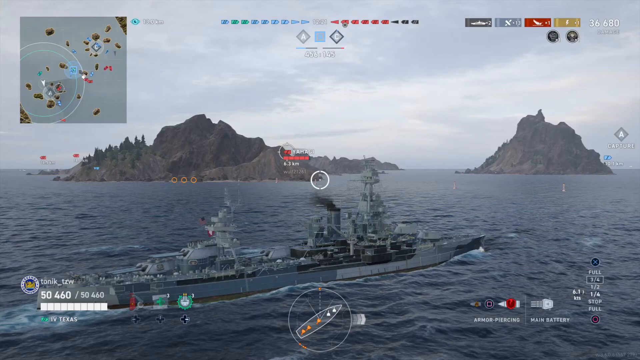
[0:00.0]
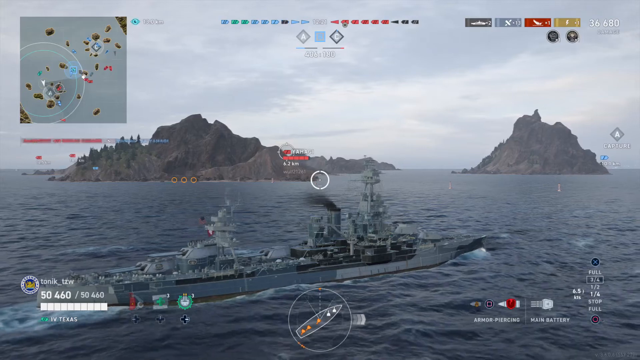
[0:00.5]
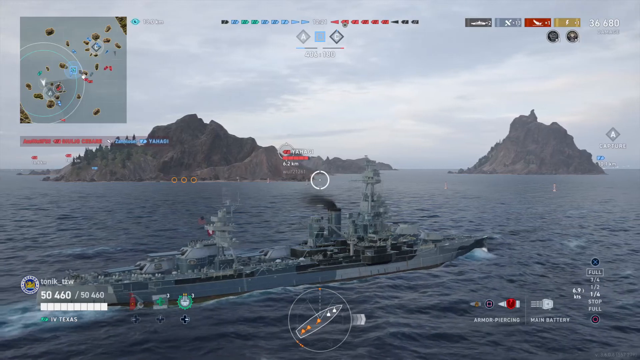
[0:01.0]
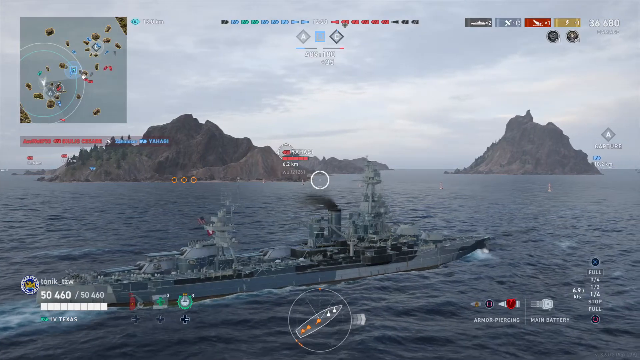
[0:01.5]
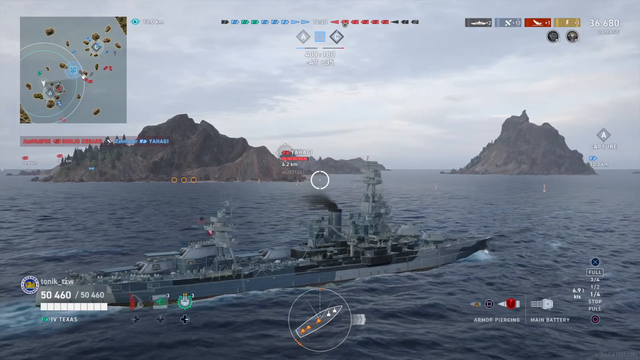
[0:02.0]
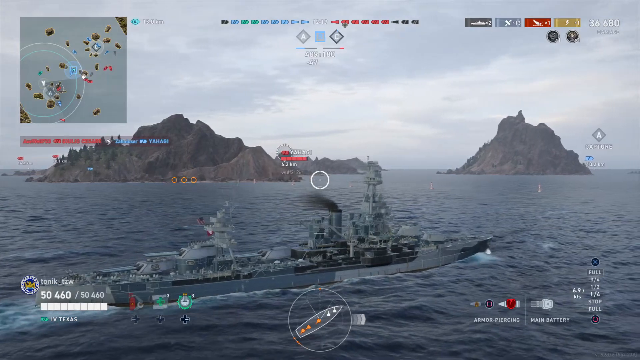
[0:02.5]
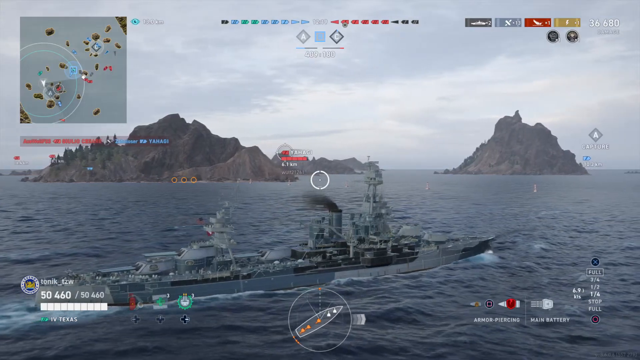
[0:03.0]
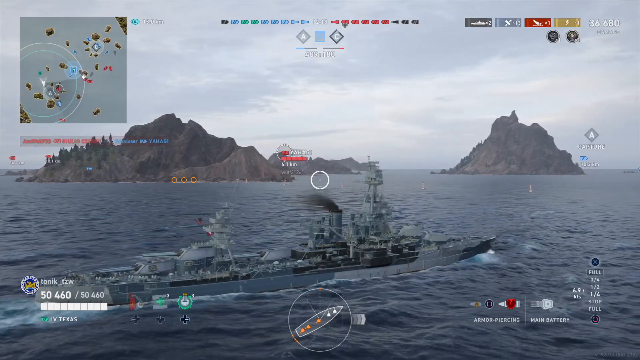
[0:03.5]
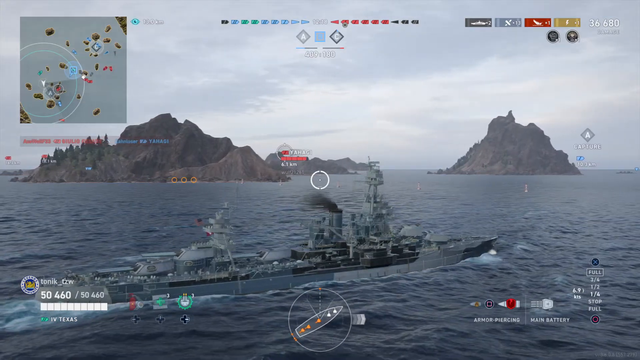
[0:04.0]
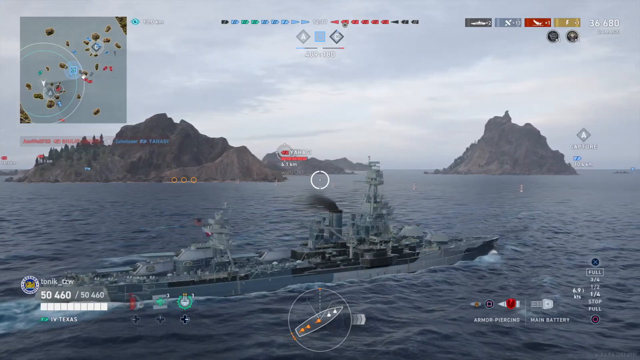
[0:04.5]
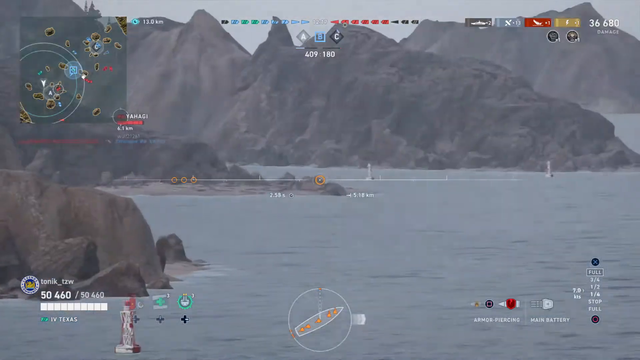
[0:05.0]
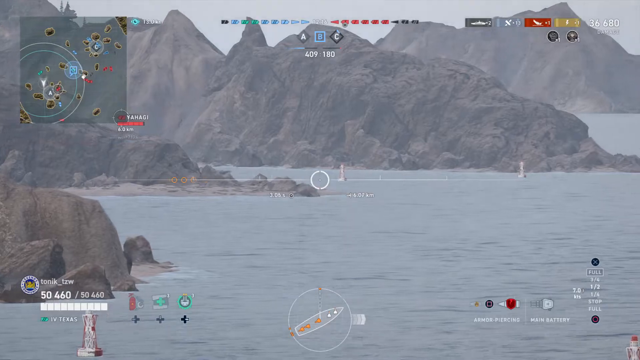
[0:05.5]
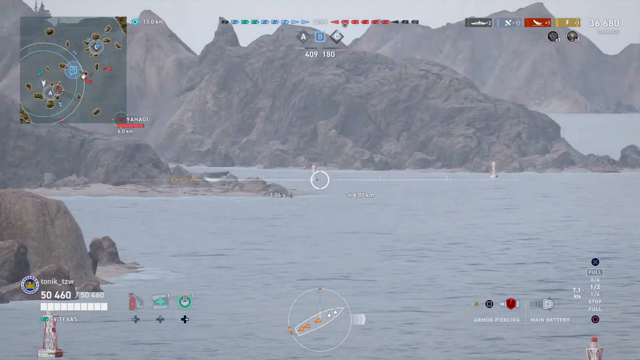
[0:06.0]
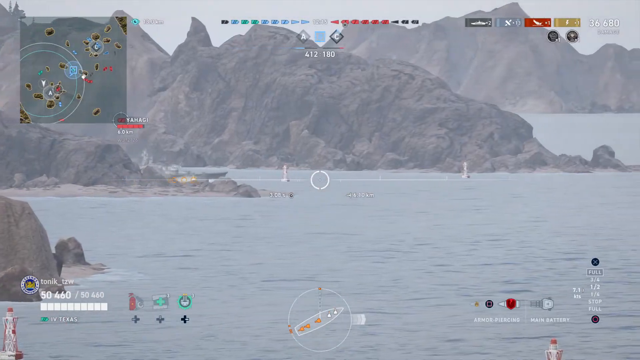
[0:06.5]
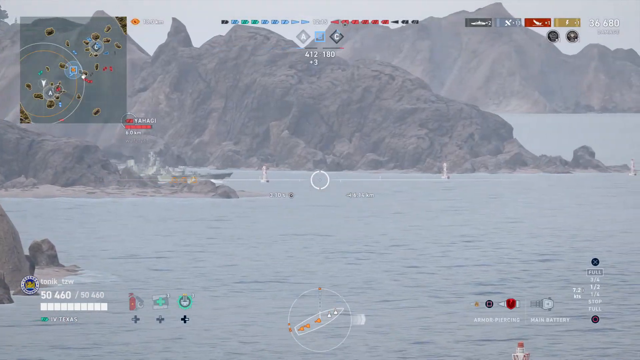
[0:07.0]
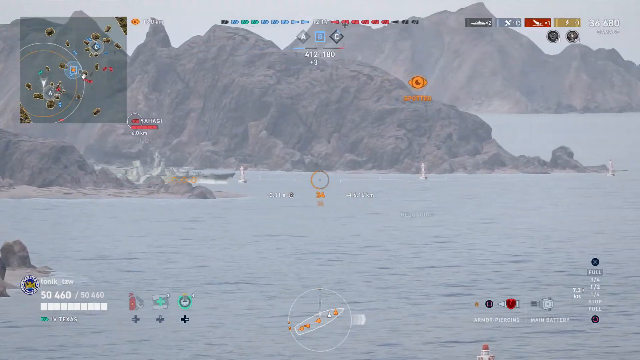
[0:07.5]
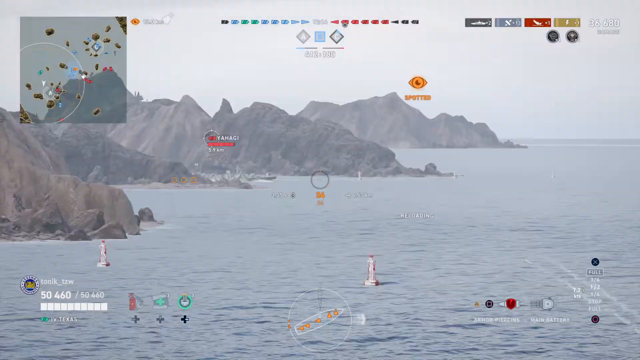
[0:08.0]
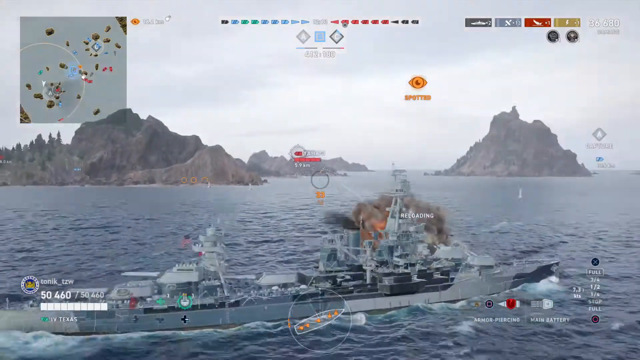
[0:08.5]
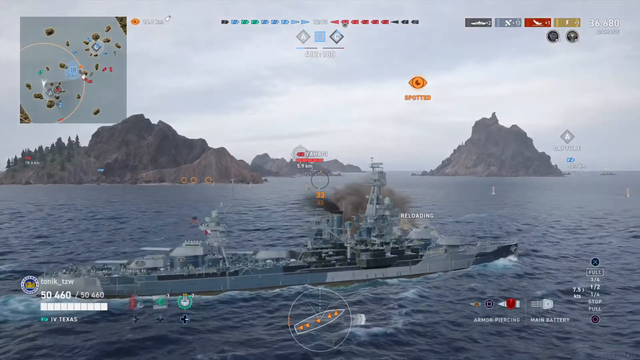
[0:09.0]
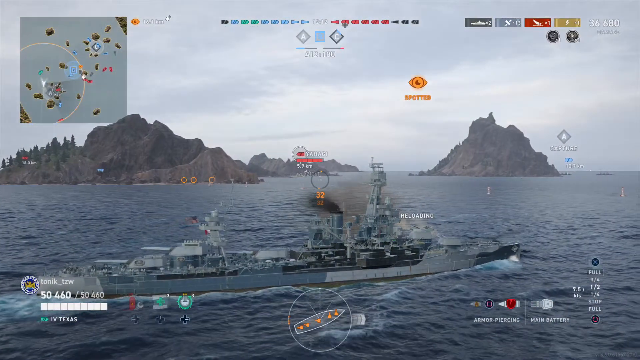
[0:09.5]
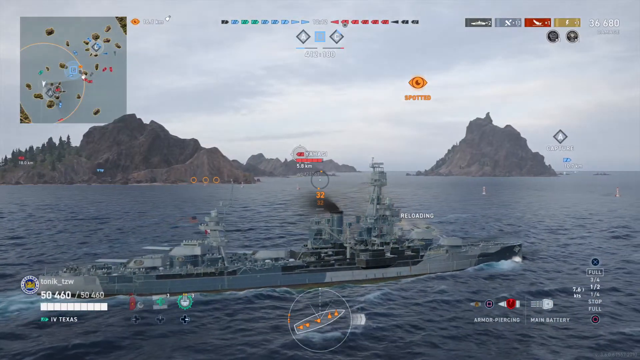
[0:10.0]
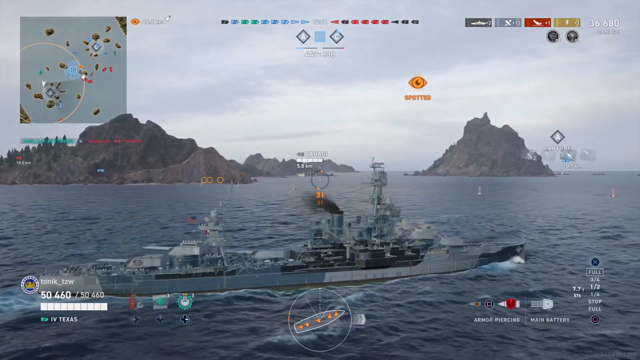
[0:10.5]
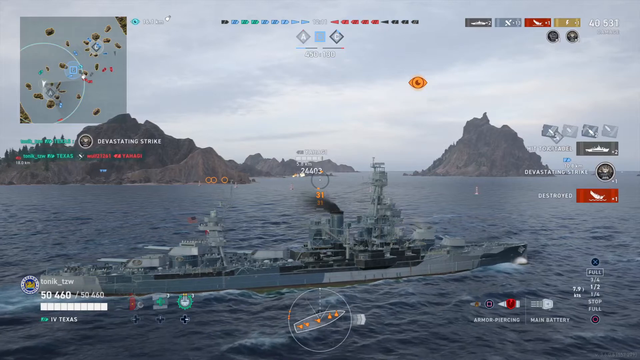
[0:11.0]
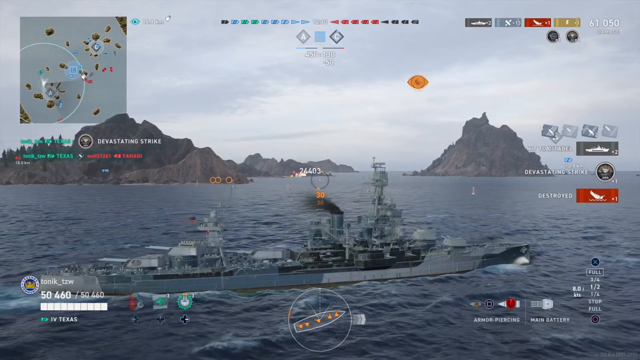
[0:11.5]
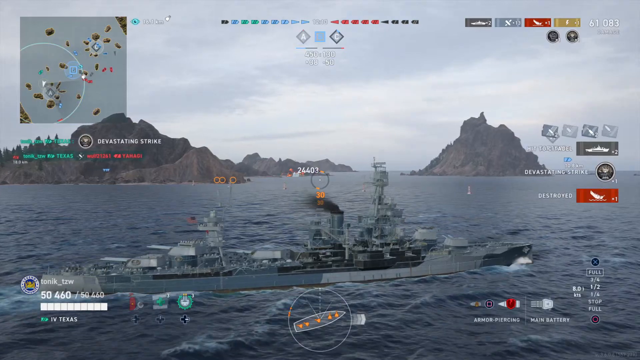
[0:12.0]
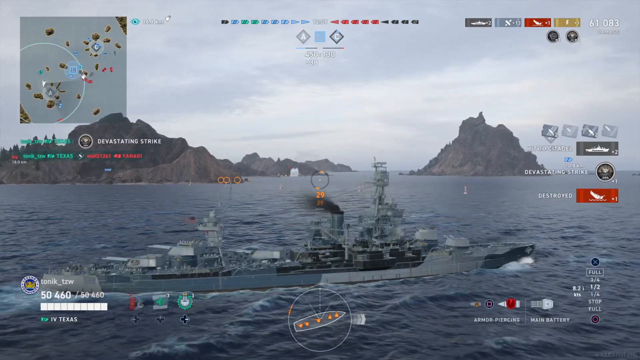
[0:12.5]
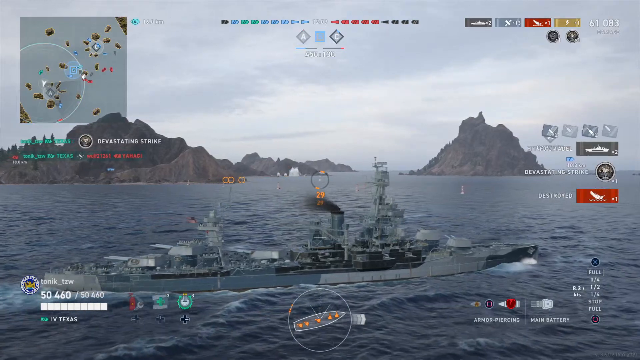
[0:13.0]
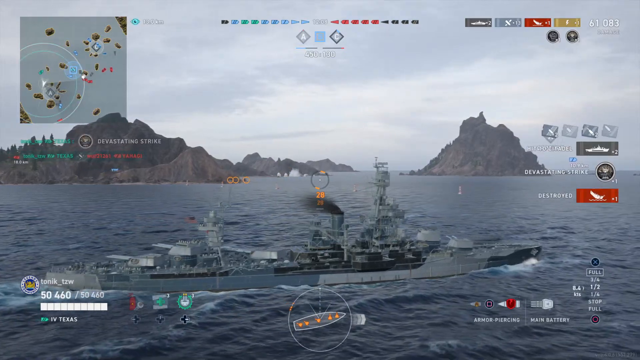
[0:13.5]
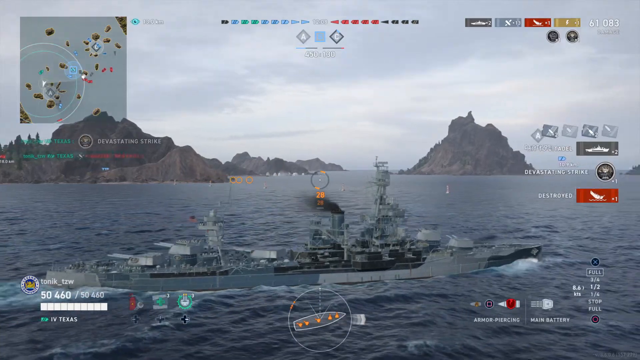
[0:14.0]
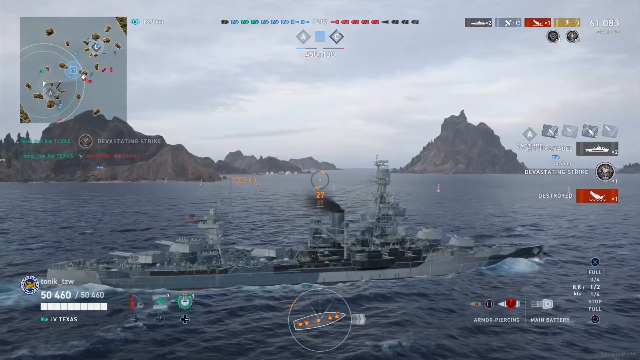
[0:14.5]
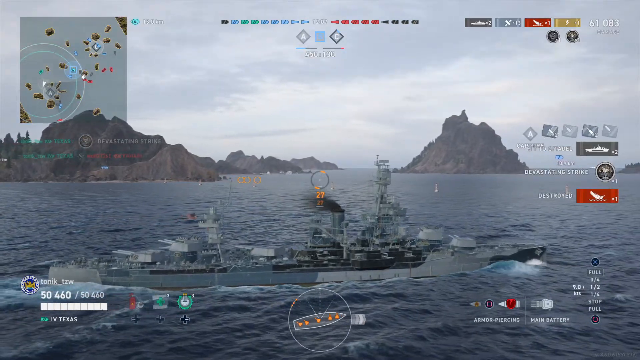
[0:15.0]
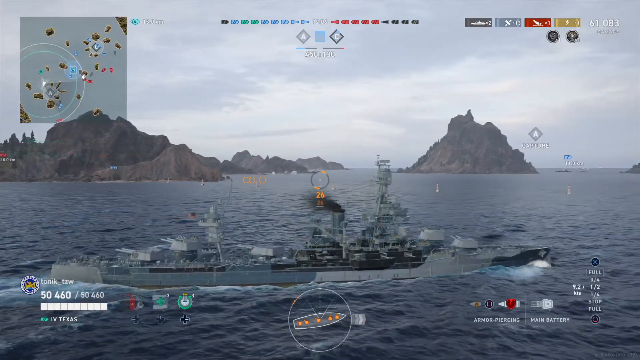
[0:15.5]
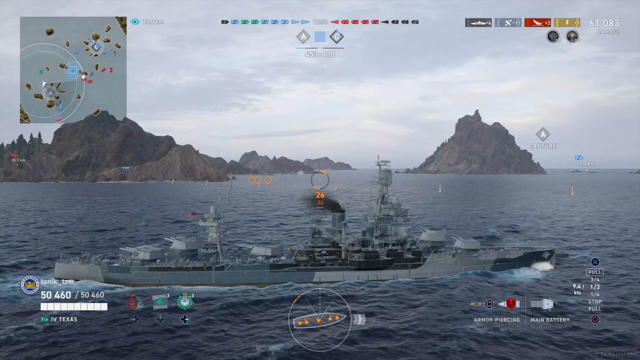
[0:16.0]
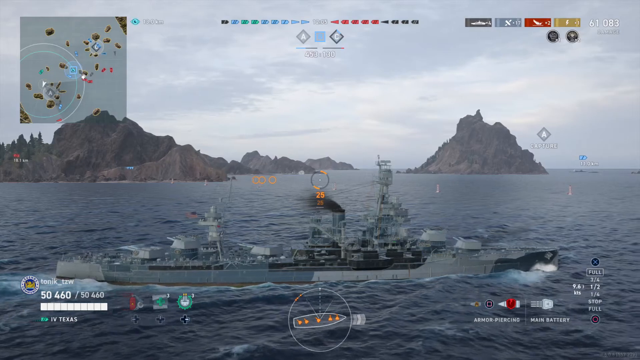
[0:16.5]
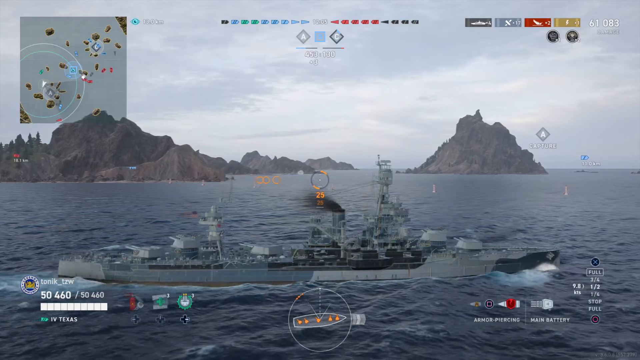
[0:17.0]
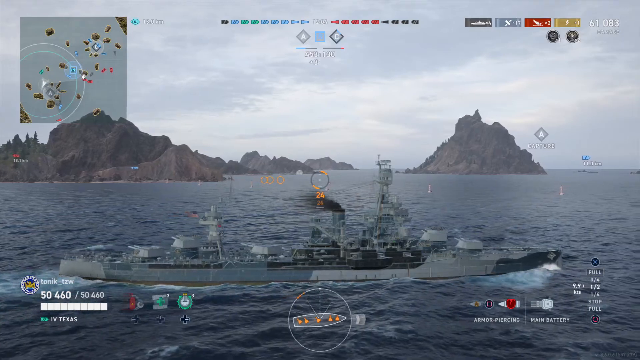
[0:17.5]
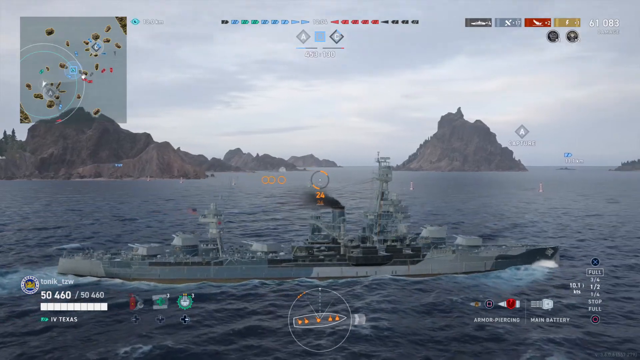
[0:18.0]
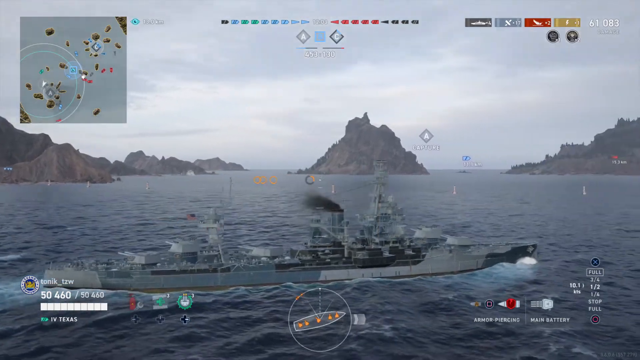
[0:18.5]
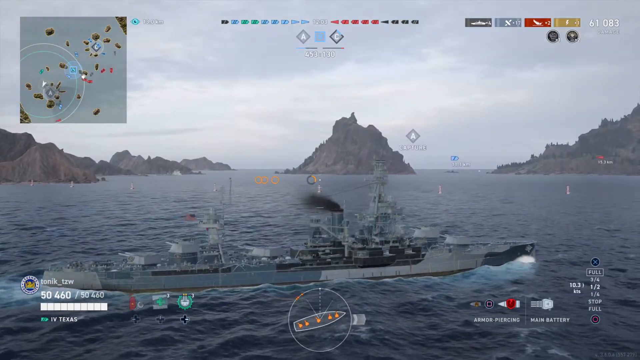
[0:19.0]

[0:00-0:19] In a game, a battleship is on some kind of water. The UI is very busy, with a lot of different things going on. In the top left there seems to be a map of some kind showing different things in the water. The view zooms in on another battleship that has a red health bar, suggesting it may be an enemy. The game world seems very big, with lots of cliffs and obstacles in the way. The graphics look very realistic. The player's ship seems to have its own health bar in the bottom left corner. In the centre is a circle with the ship on it, with different circles around it, possibly a play on the board game Battleships. The day is very overcast and very grey.